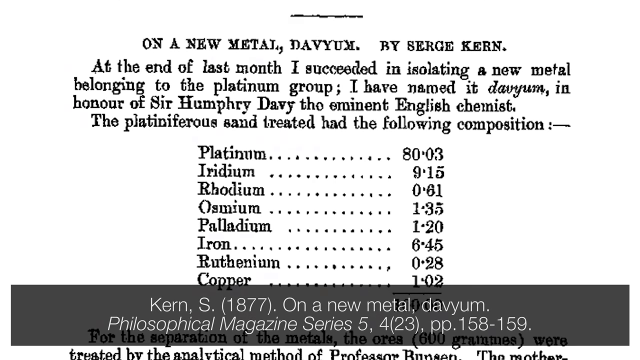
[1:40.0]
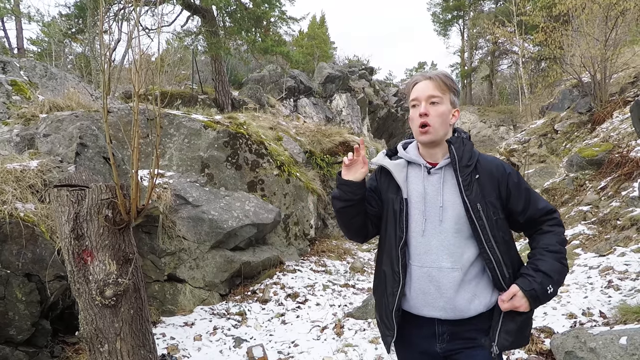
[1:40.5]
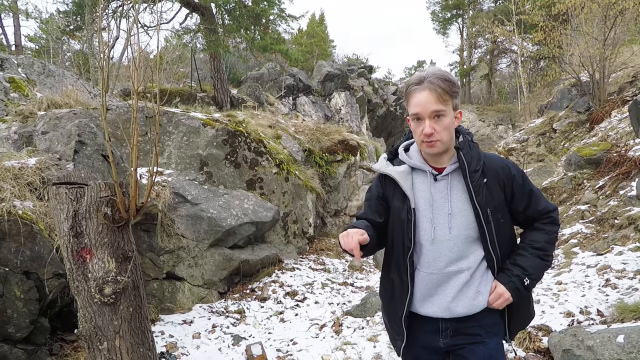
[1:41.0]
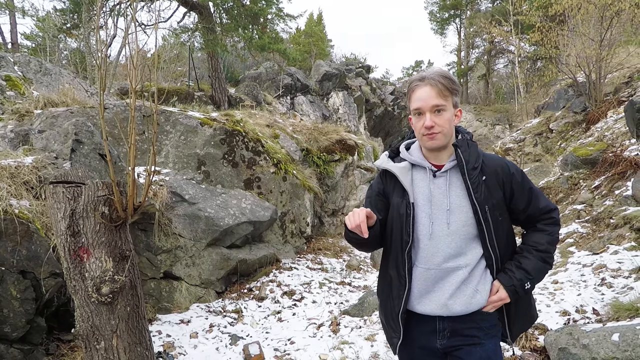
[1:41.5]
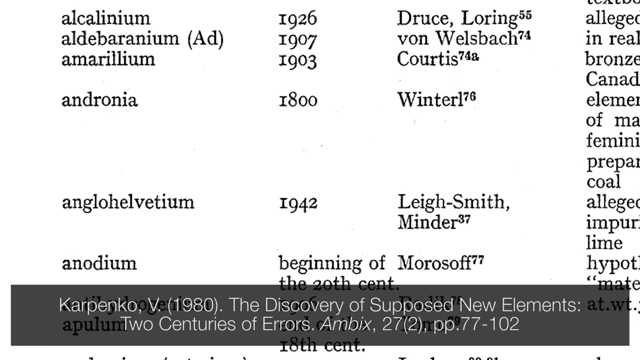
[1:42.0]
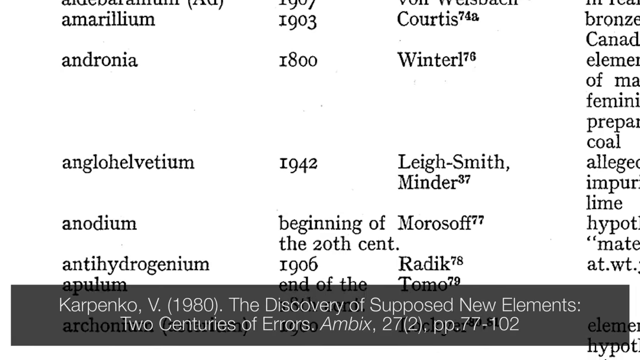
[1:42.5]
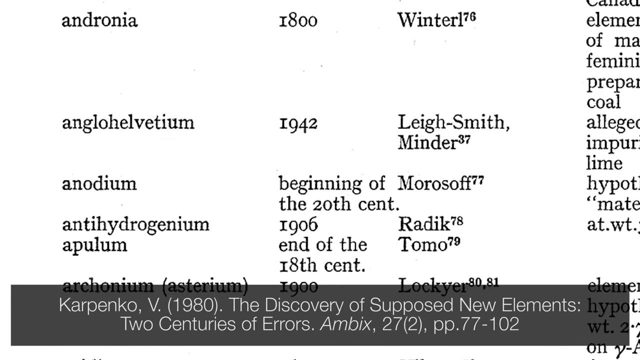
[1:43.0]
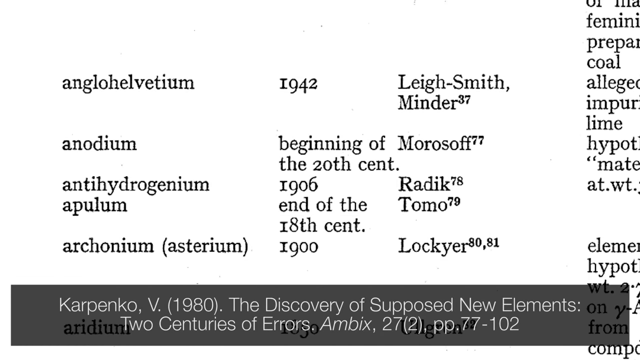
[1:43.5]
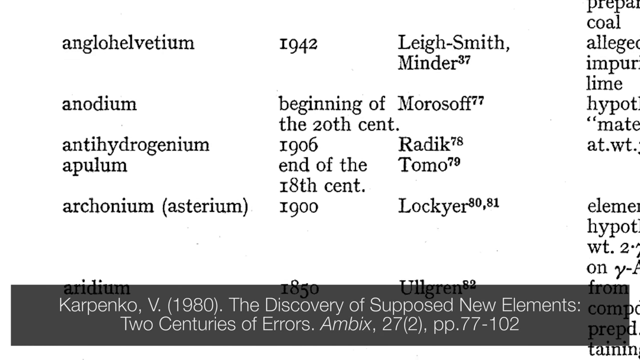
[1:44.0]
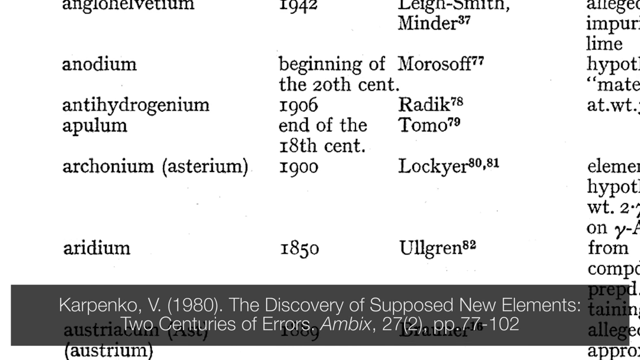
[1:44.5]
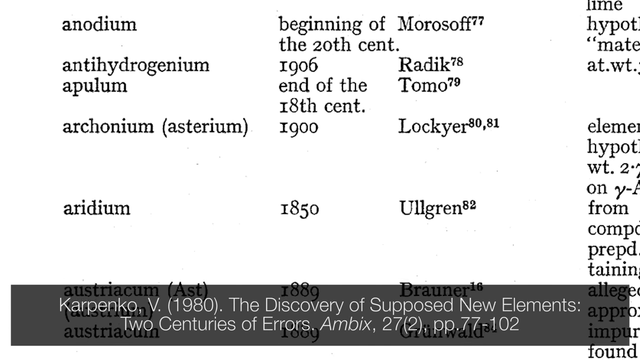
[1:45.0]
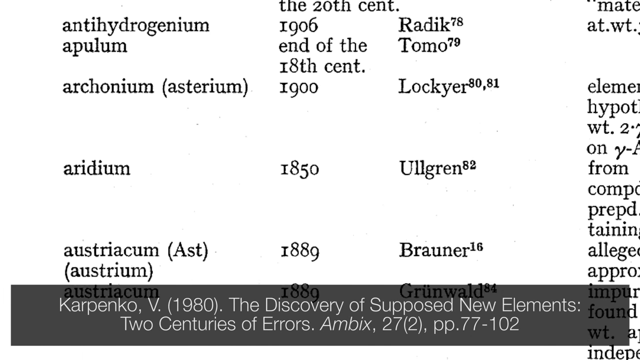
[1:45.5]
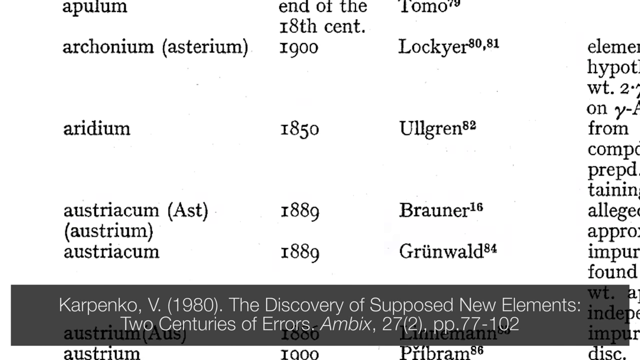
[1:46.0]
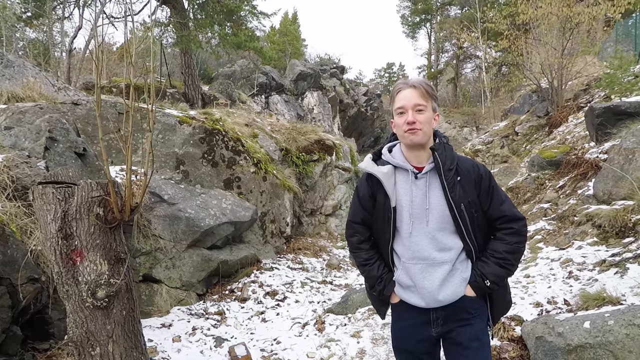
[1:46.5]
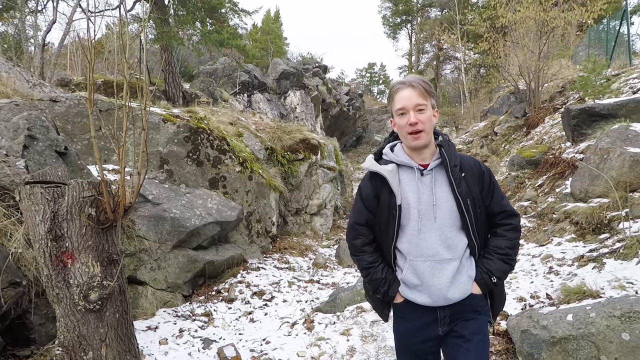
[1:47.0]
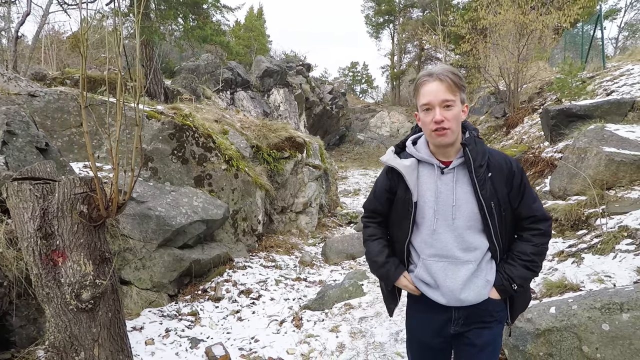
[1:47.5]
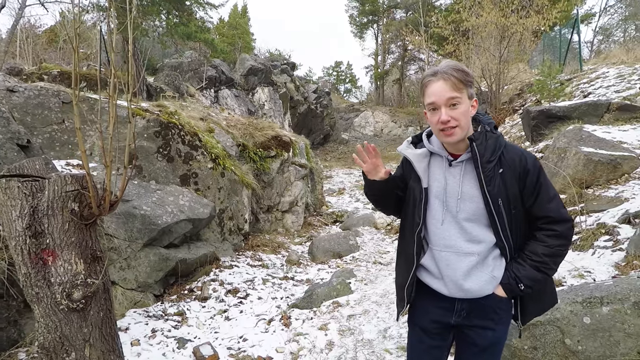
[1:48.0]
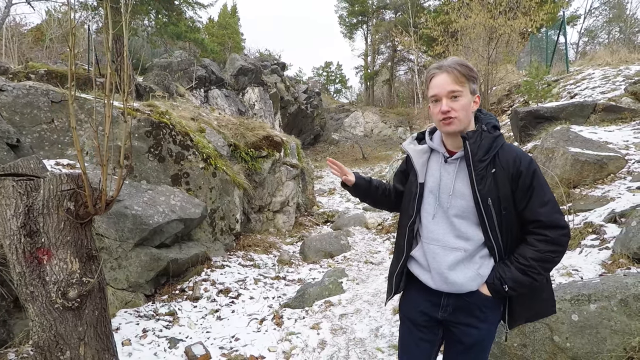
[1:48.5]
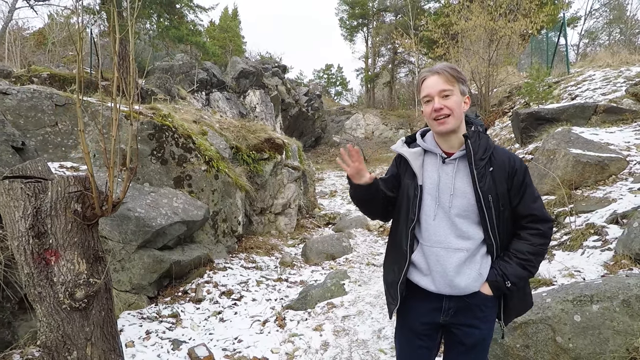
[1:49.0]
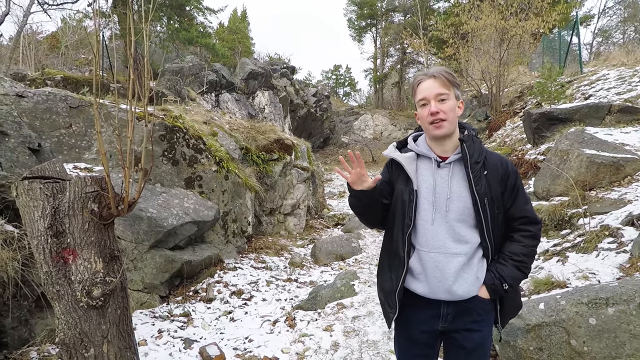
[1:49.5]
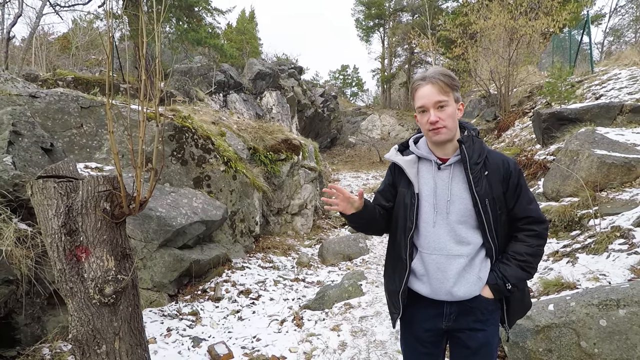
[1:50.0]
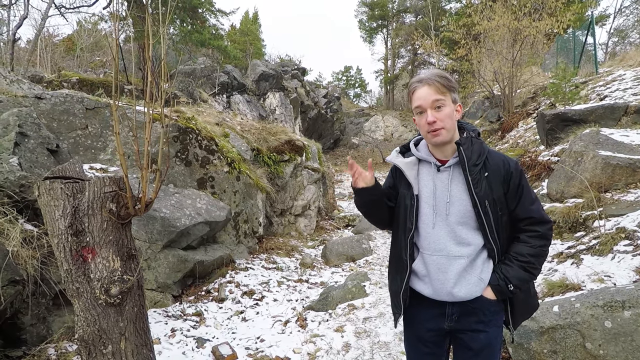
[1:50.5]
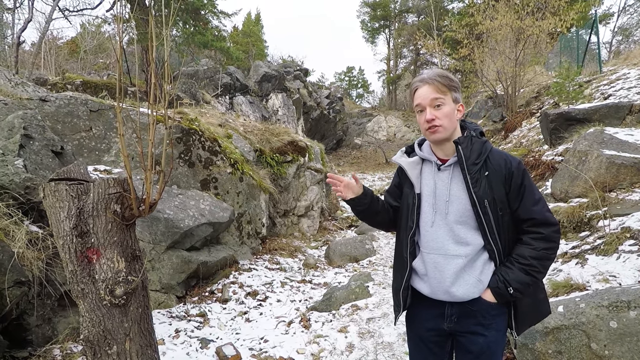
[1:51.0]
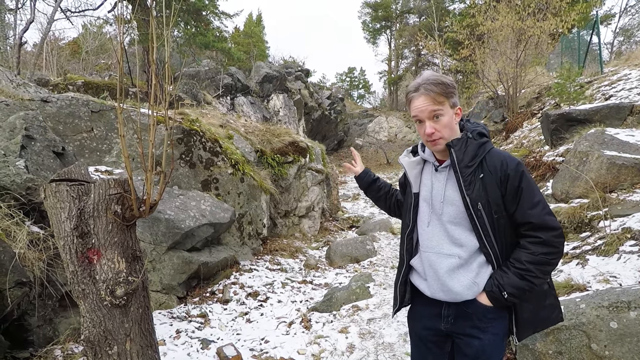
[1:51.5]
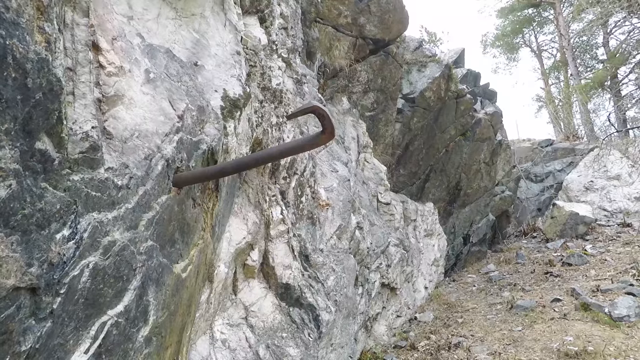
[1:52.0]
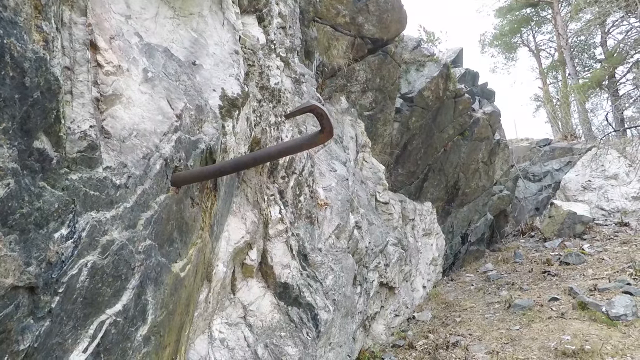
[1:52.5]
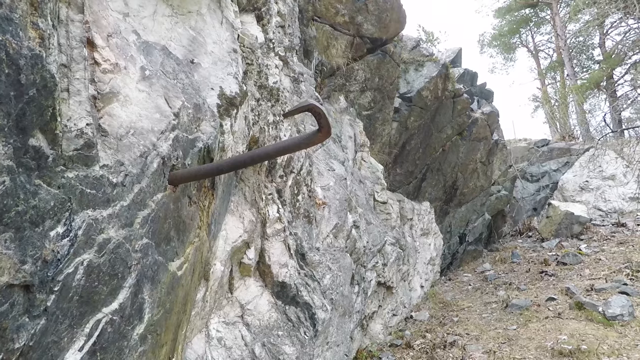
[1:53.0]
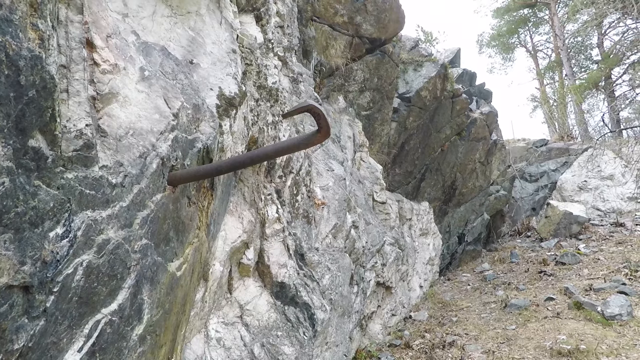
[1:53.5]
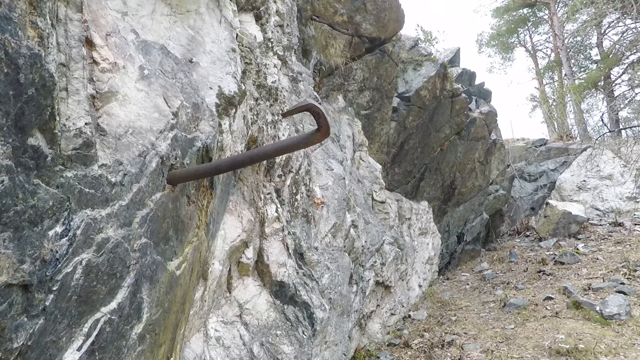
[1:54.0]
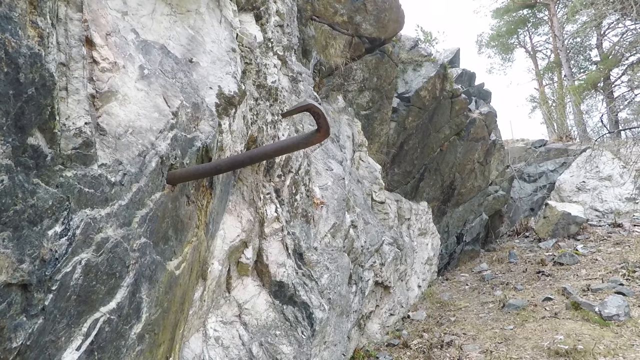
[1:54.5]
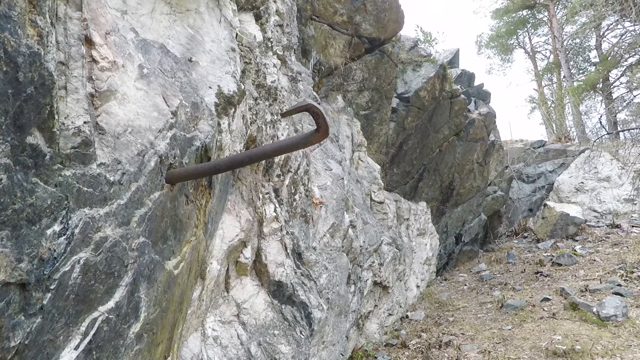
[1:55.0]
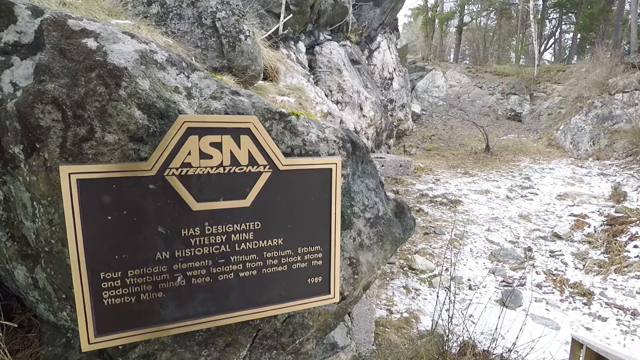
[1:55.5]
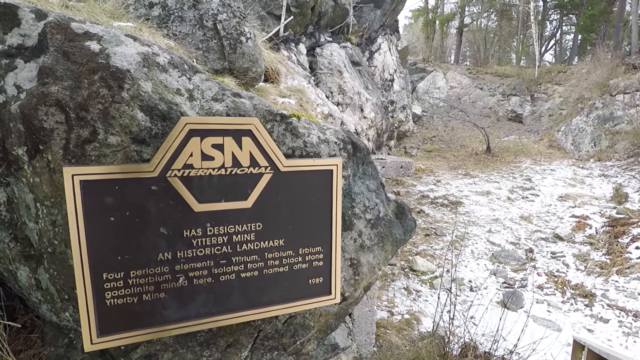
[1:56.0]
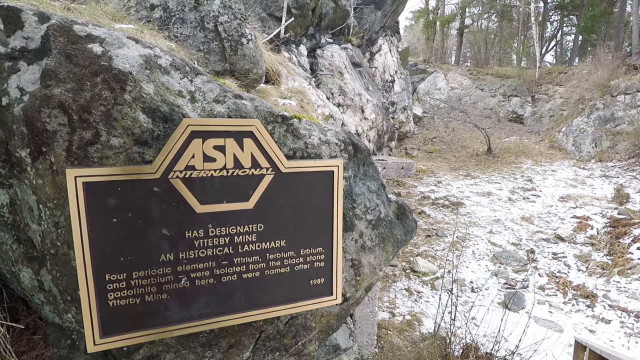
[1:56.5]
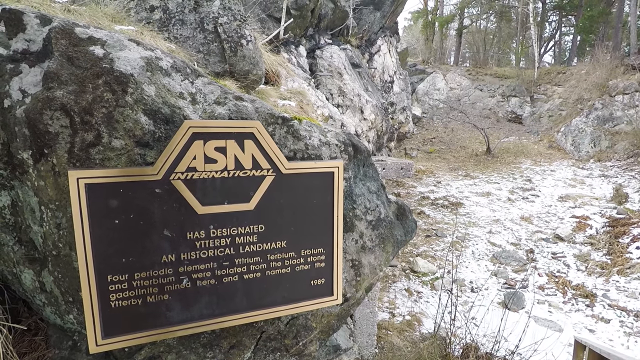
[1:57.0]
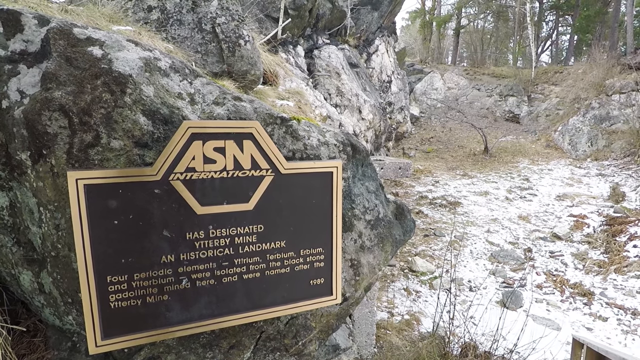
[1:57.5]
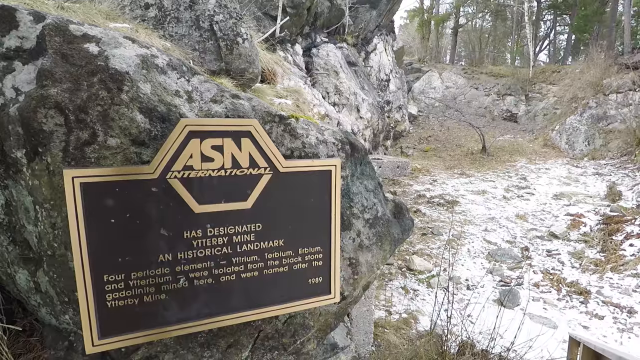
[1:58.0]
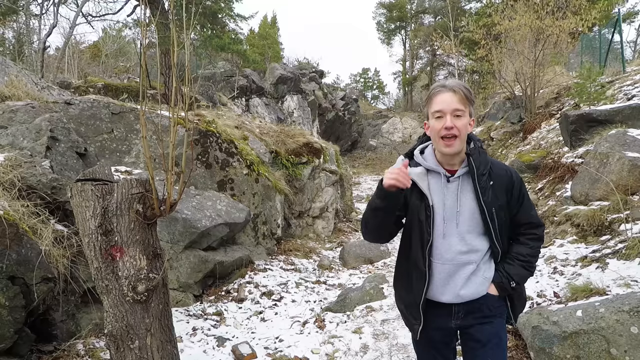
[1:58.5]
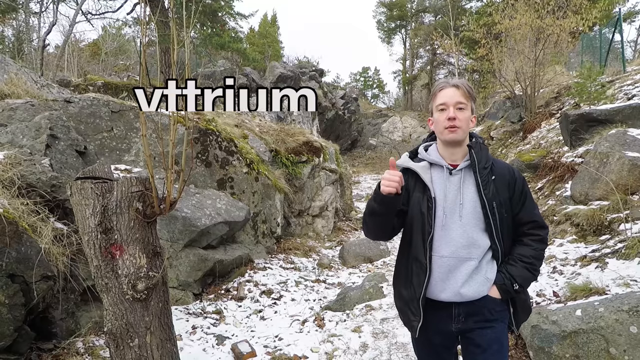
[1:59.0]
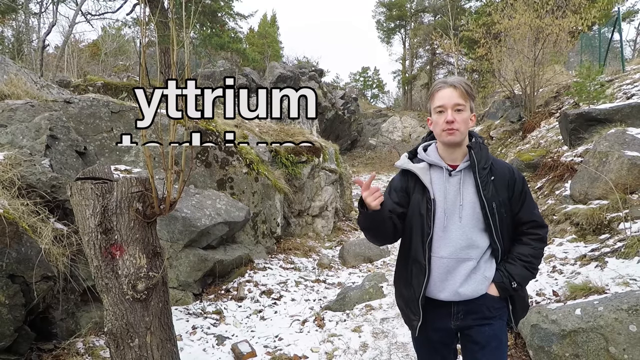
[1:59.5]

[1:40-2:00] The video is One Town, Four Elements, Uterby. A table of elements flashes on screen, listing the year each element was found; the elements are listed alphabetically, including iridium, but it goes by too quickly to read. What appears to be a big metal hook sticks out of a rock. The place looks like a historical area, and a bunch of dates from the 1800s are shown. A plaque on some of the rocks says it is a historical landmark, and there apparently was a mine there. There seems to be information written on the sign, but it goes by too quickly. The rocks look unusual and seem full of some kind of minerals; they look kind of like slate but are layered and in different colors. It looks like things may have been discovered at the site even into the 1900s.